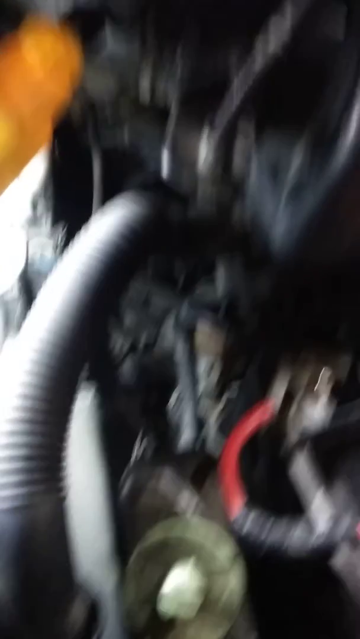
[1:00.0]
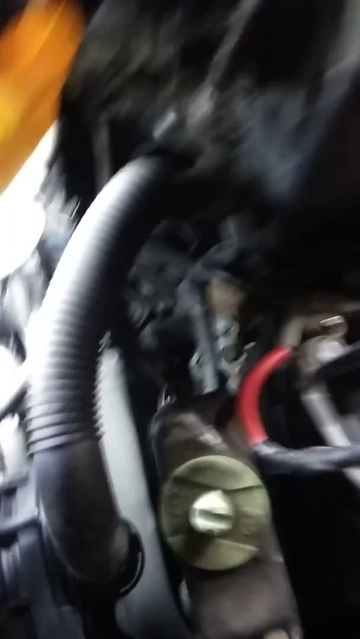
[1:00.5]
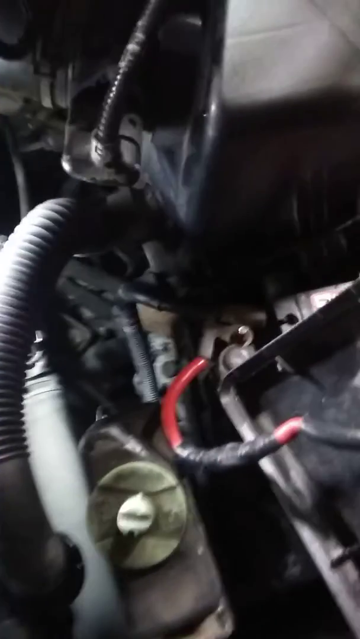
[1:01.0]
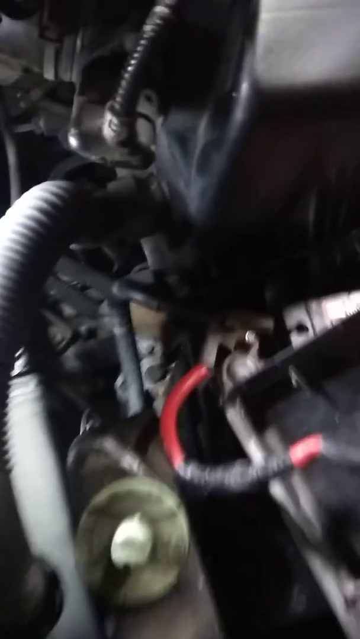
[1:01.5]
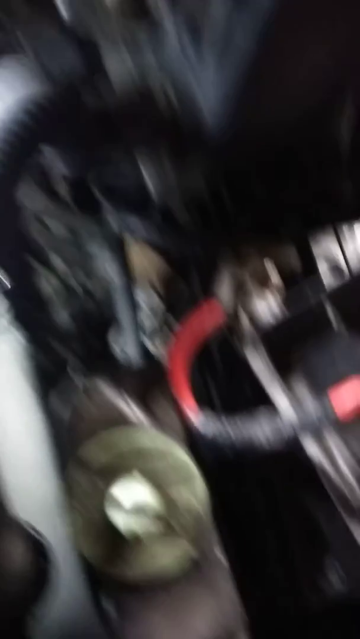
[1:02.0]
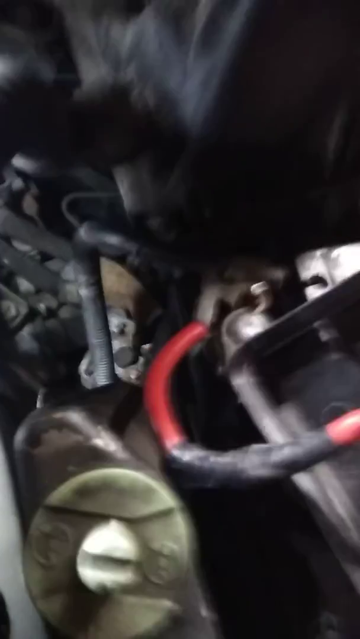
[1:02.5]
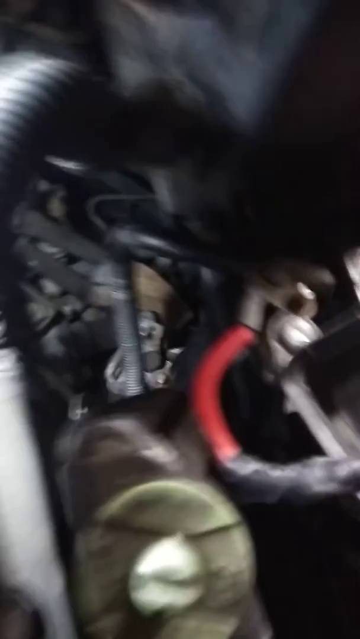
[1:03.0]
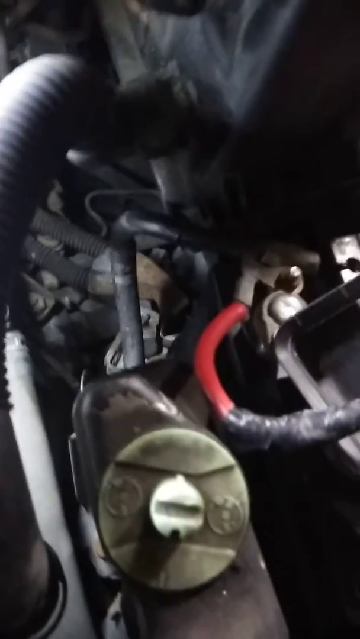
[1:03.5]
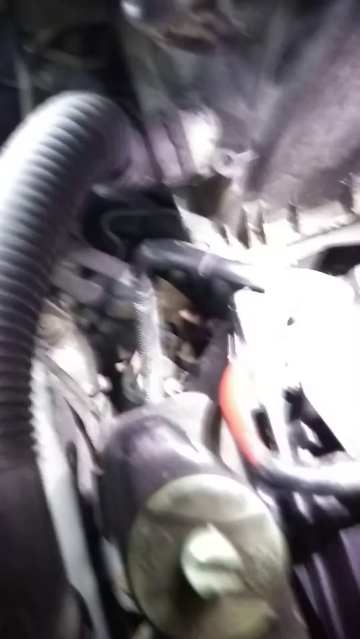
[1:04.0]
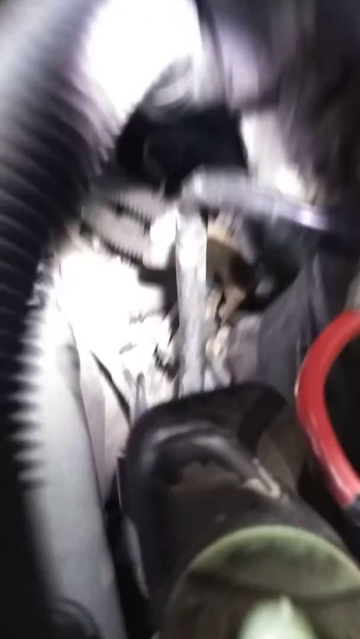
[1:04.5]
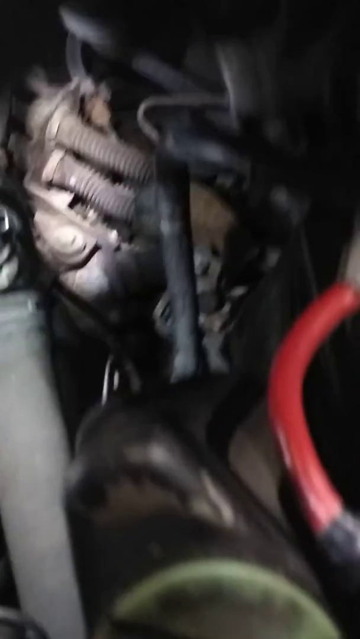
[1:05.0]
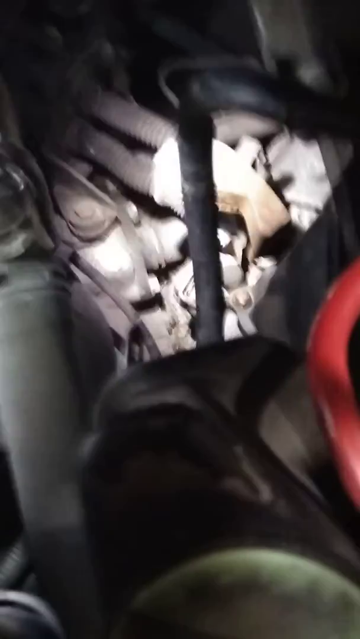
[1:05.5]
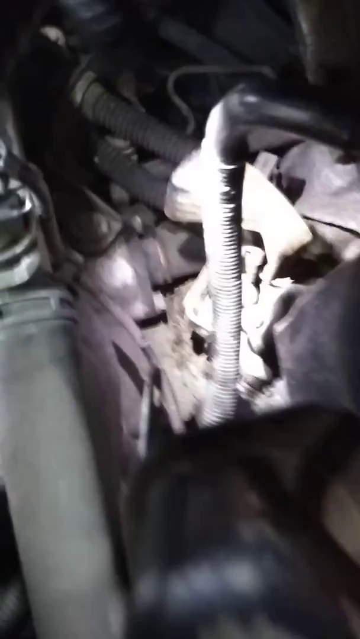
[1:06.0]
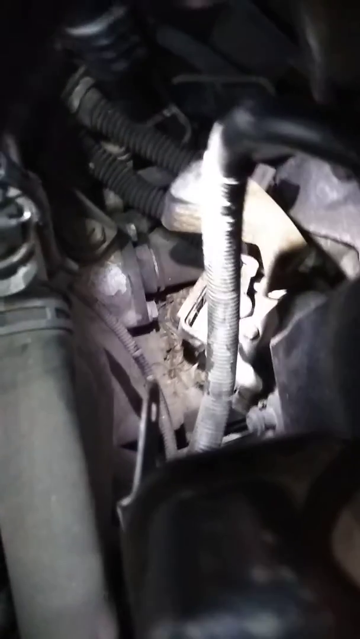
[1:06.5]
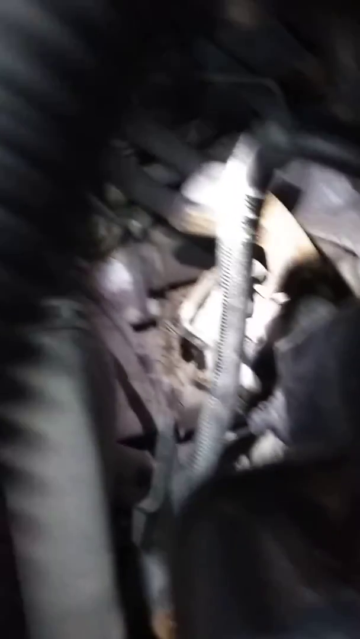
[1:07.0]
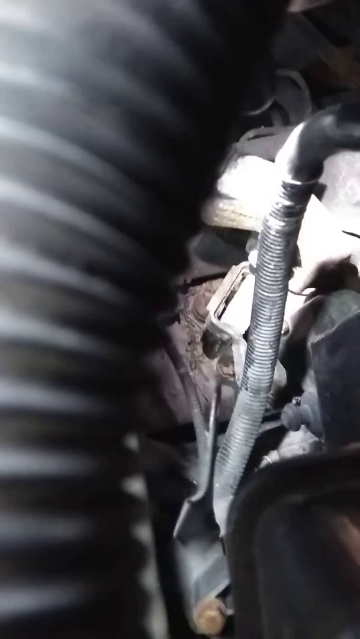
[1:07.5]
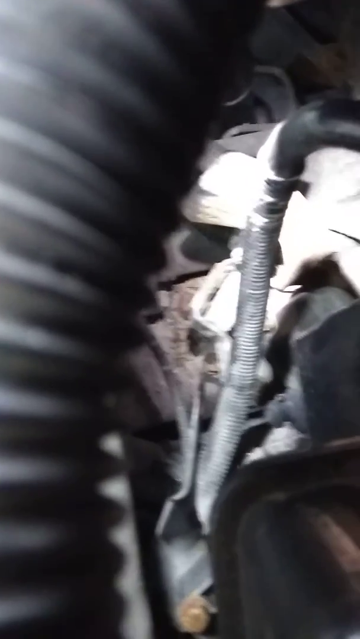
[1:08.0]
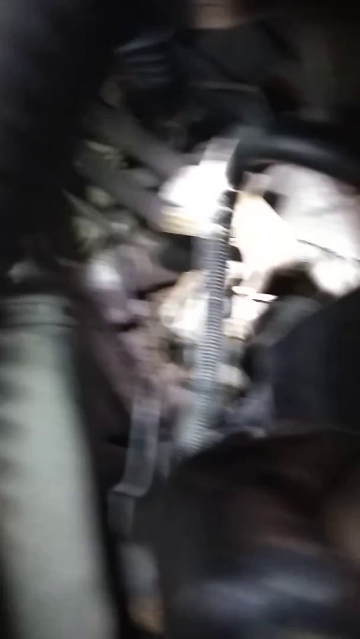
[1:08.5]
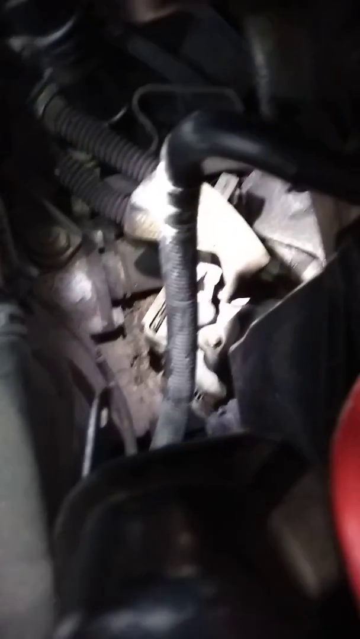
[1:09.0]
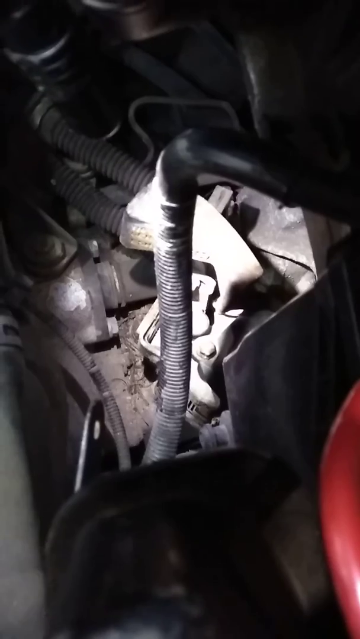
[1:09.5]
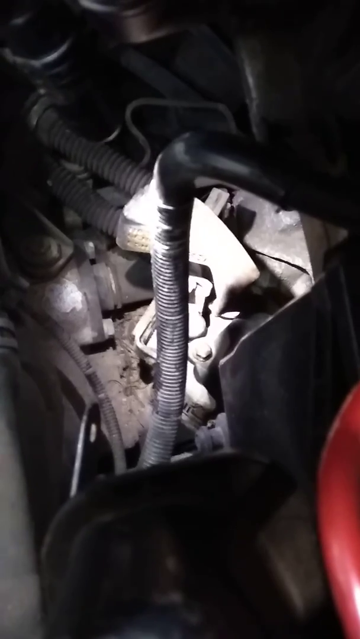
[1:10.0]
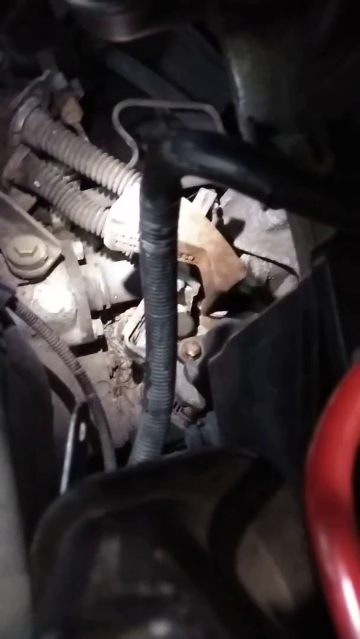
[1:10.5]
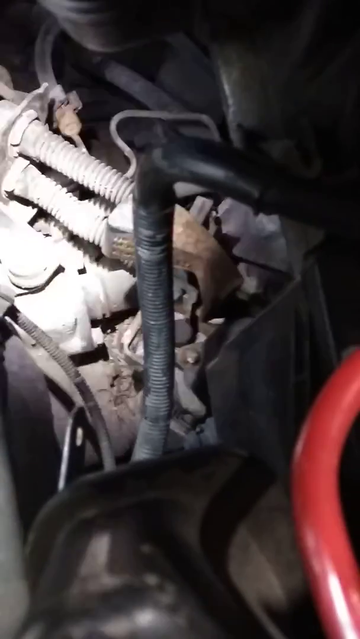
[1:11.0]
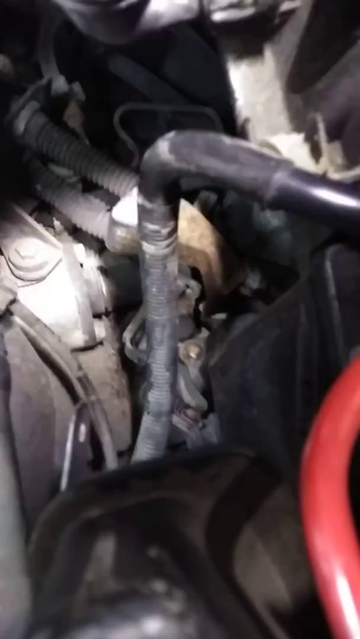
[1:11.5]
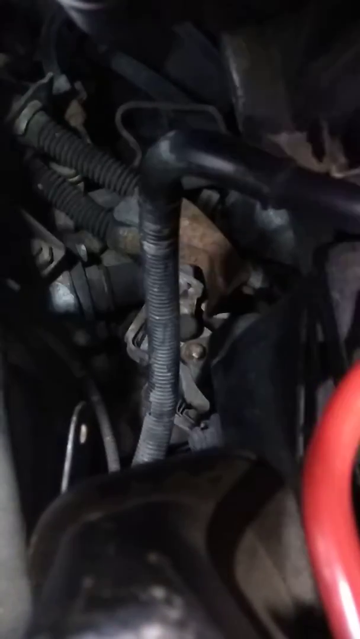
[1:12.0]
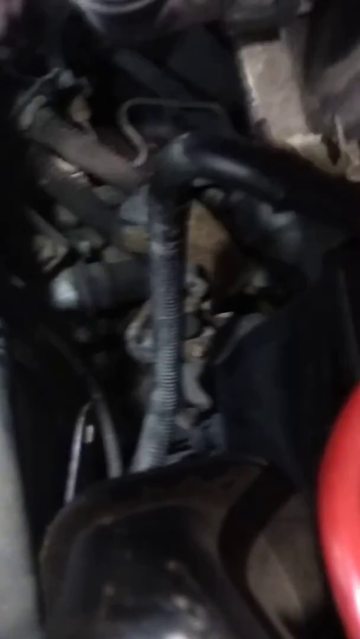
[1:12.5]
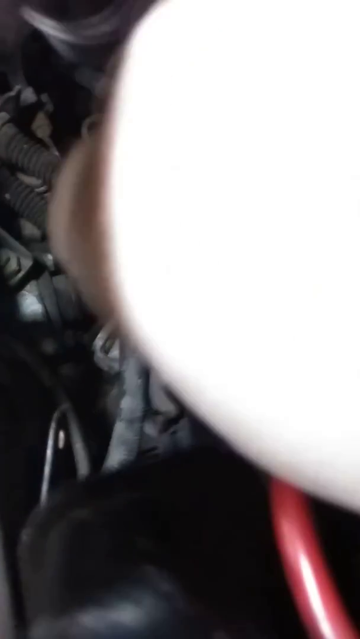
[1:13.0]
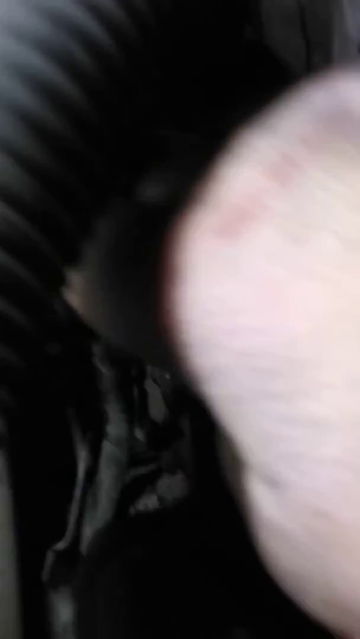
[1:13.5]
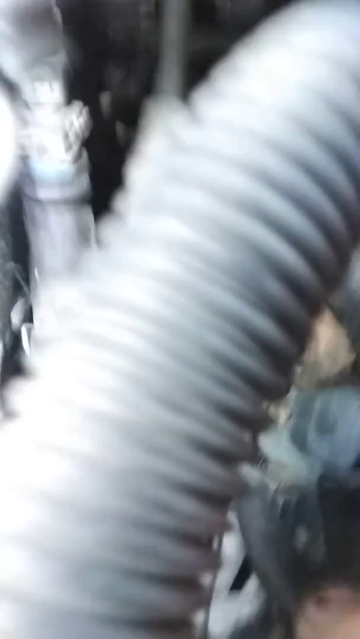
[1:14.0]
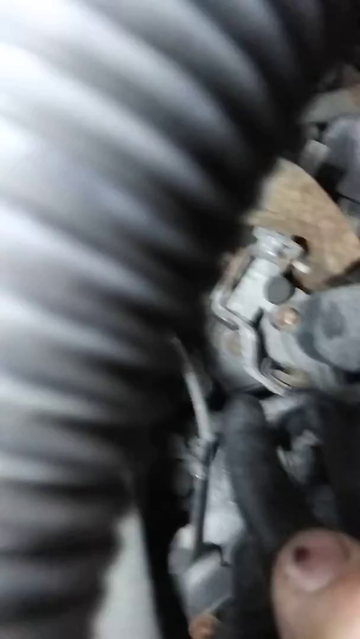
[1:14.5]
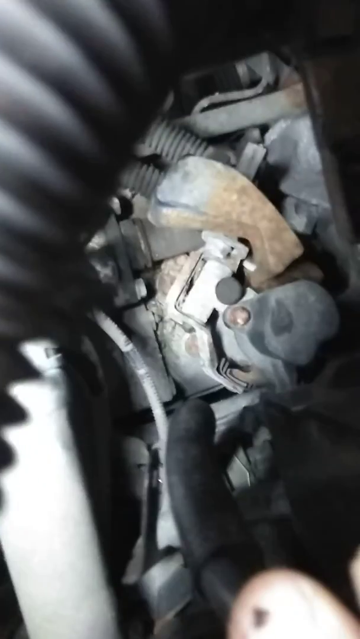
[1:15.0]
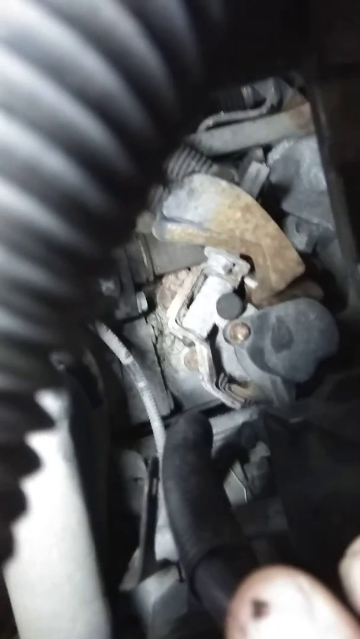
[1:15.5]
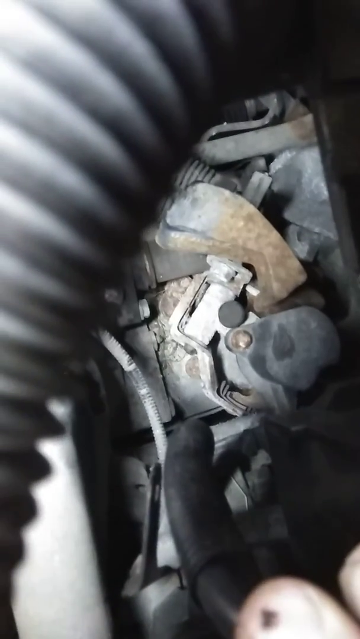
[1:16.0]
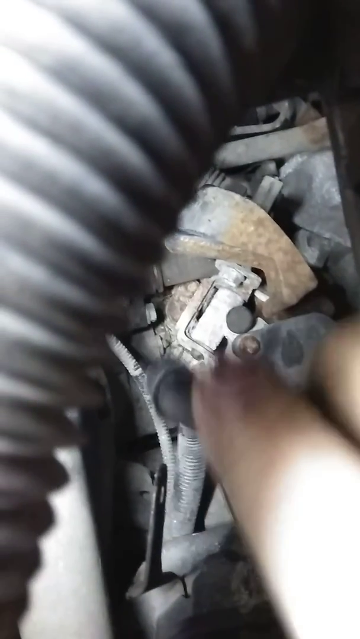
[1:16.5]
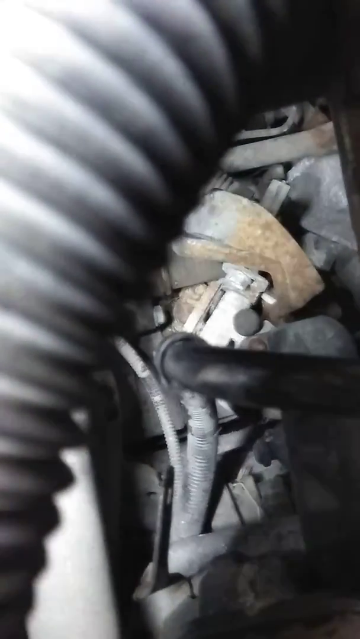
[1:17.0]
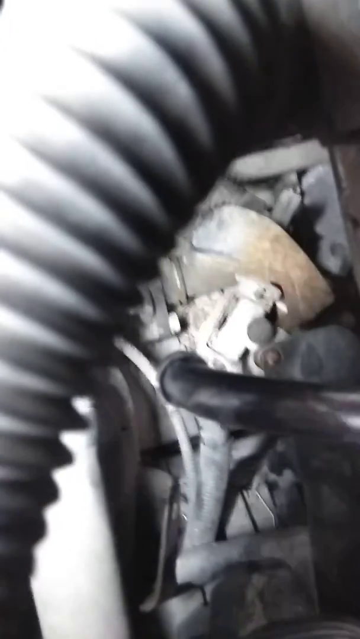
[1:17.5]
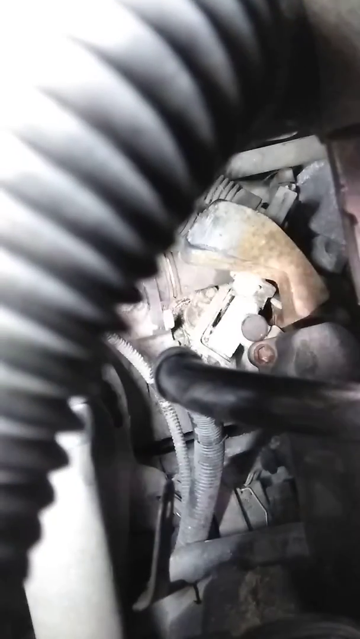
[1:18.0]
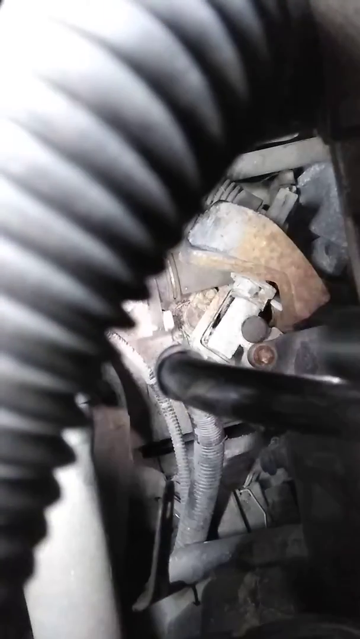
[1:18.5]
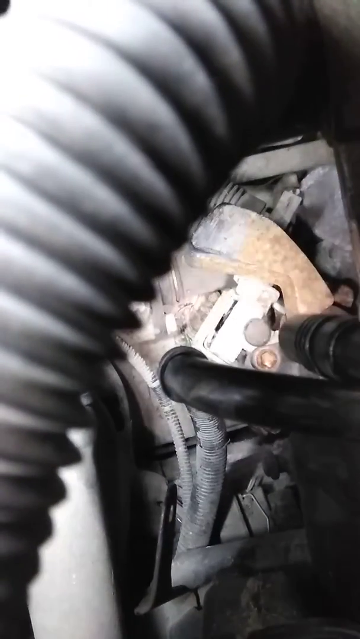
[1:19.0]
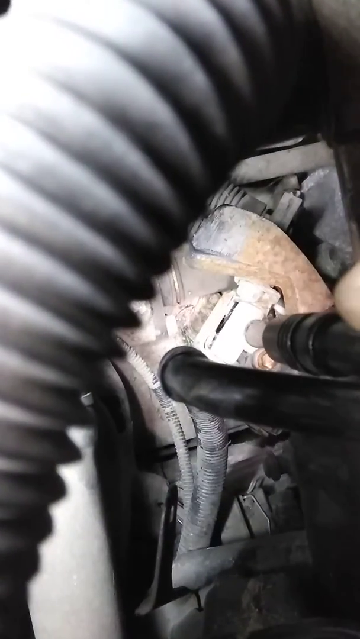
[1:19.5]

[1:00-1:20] The camera holder continues looking more closely at the engine. A long, vertical grey pipe is visible; at the top it is shaped like the top of a walking cane and is smooth metal, and lower down it becomes a ridged plastic tube like one found on a vacuum cleaner. Another plastic tube resembling a vacuum cleaner tube comes in at the top left of the screen. The camera holder appears to be shining a torch into the deeper part of the engine, where a few more of these vacuum tubes are visible. Looking down toward the base of the engine through to the floor, there are lots of loose bits of metal and plastic on the floor. The whole area looks incredibly messy, and it looks like a very old, poorly maintained car with lots of rusty bits of metal.